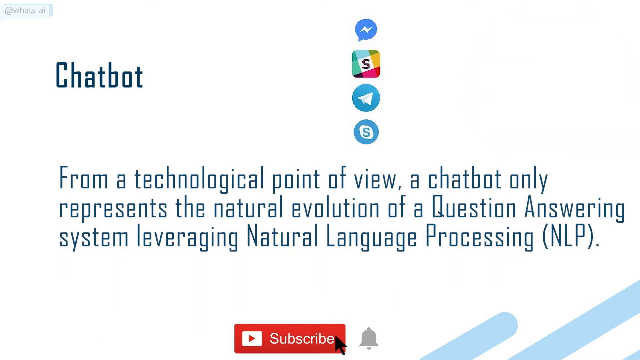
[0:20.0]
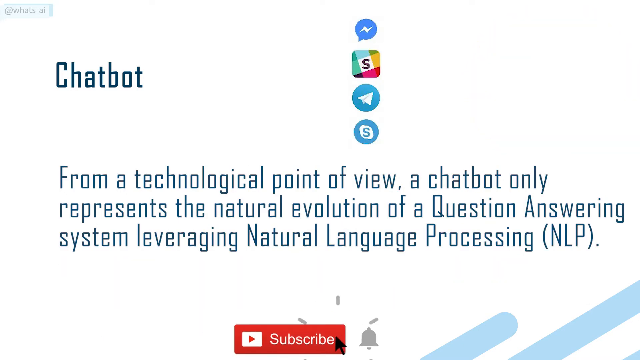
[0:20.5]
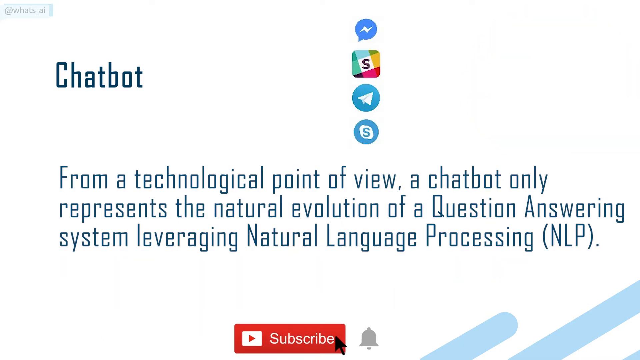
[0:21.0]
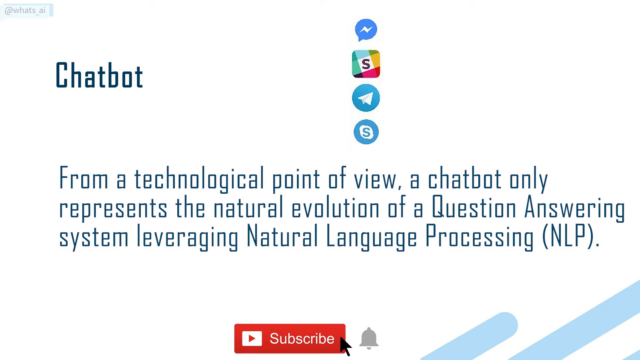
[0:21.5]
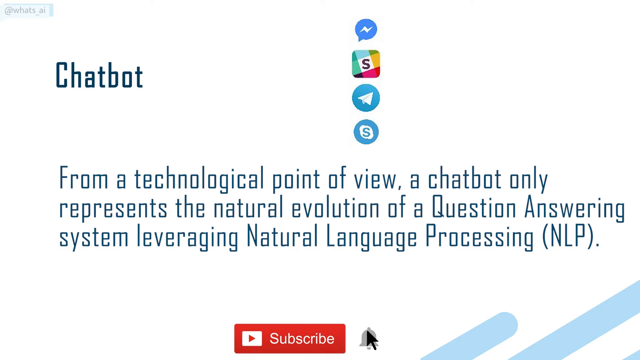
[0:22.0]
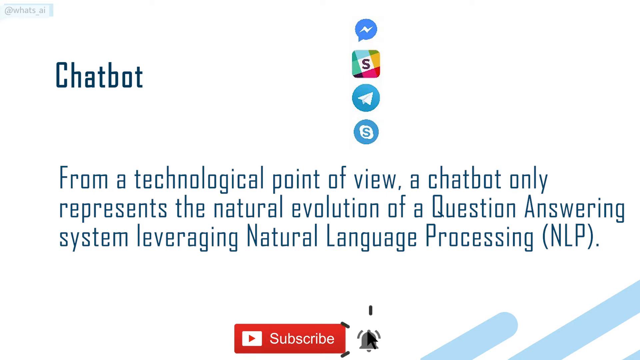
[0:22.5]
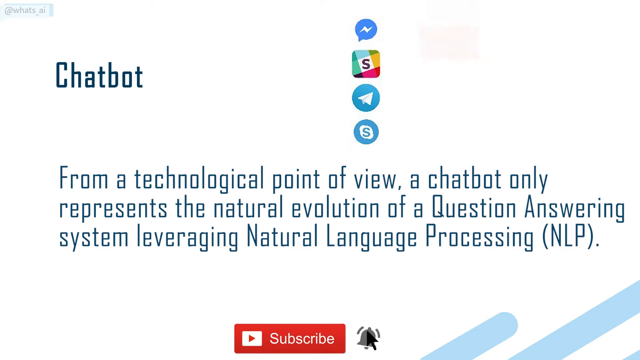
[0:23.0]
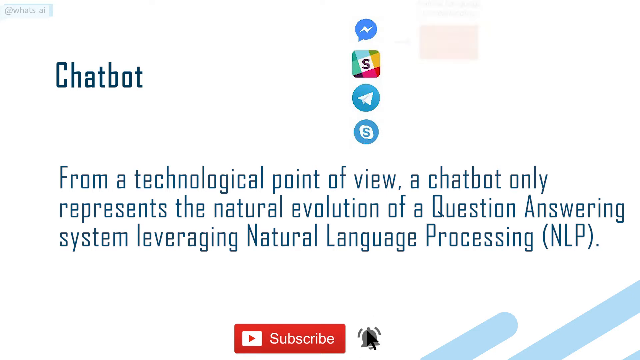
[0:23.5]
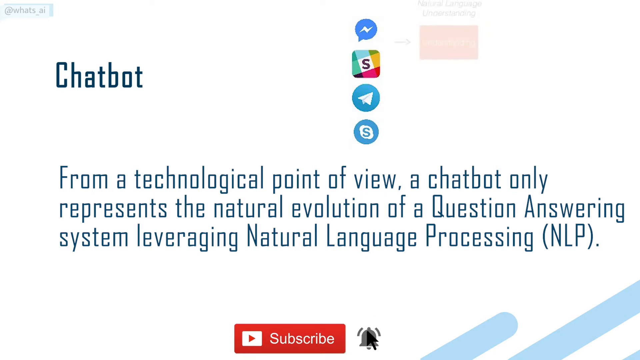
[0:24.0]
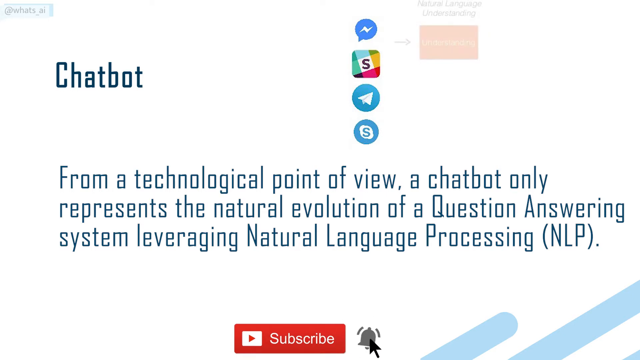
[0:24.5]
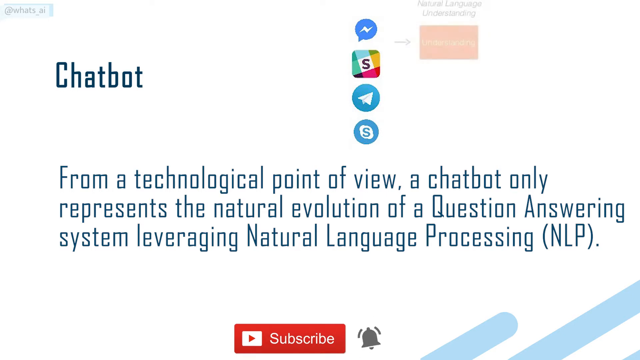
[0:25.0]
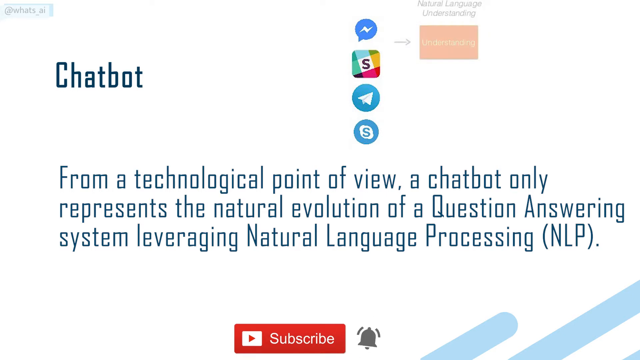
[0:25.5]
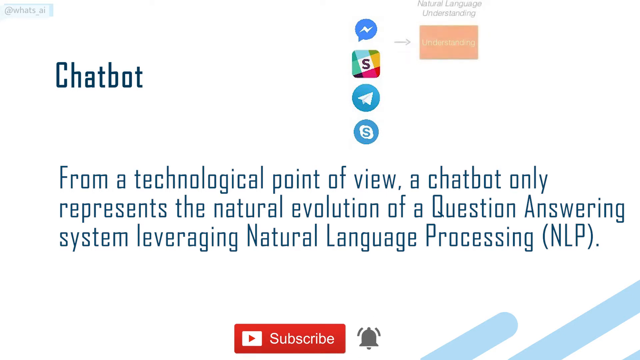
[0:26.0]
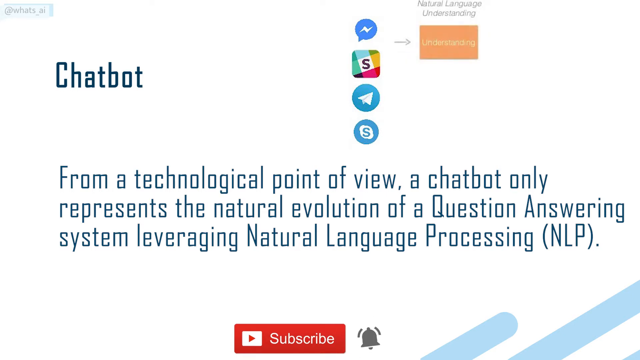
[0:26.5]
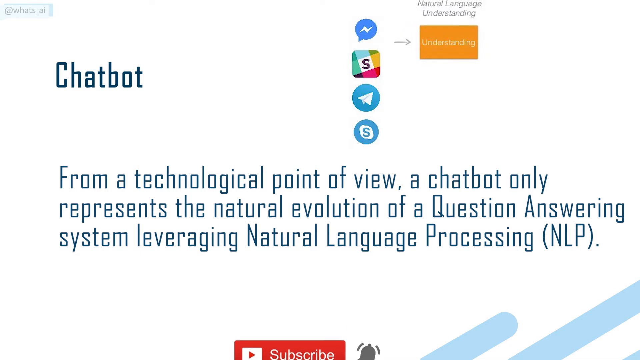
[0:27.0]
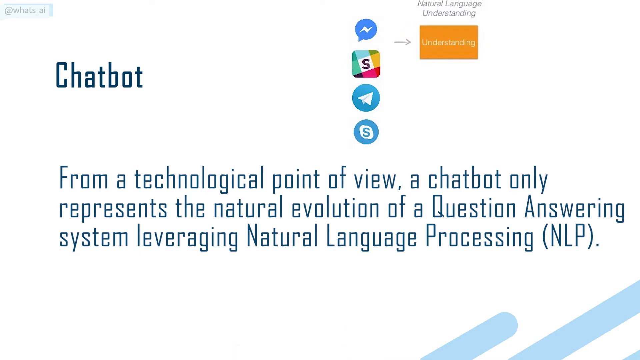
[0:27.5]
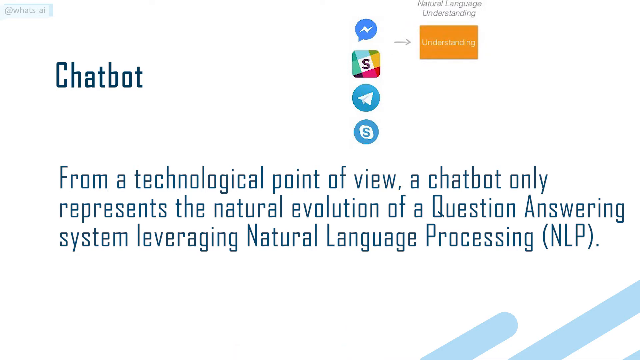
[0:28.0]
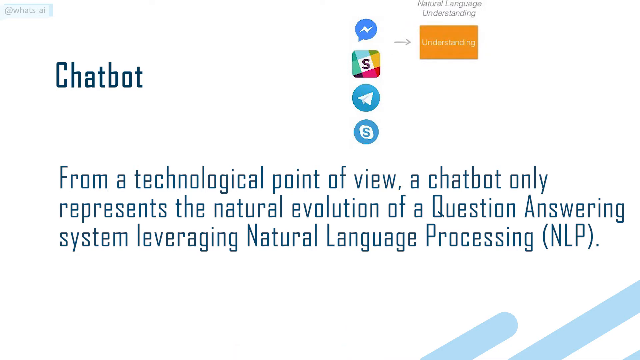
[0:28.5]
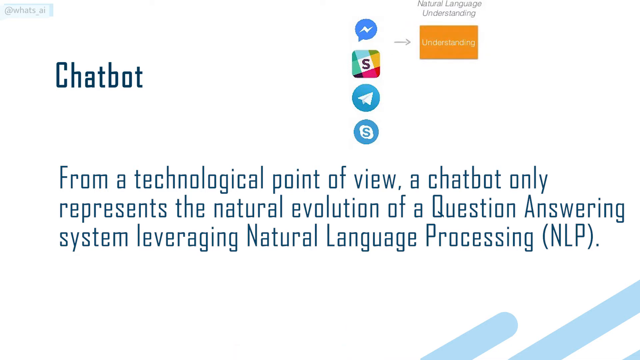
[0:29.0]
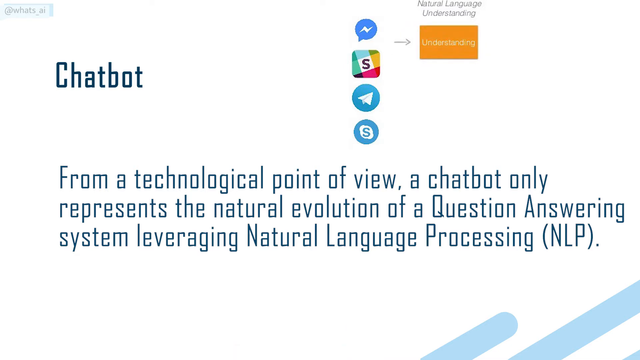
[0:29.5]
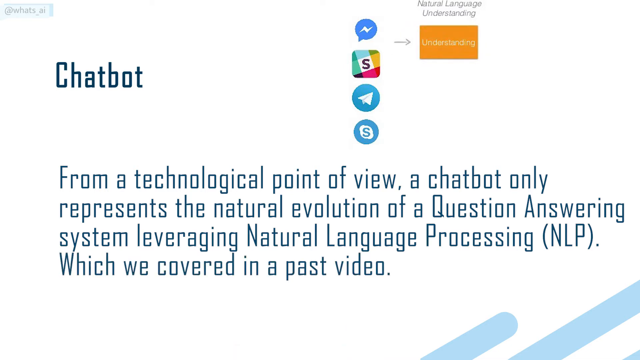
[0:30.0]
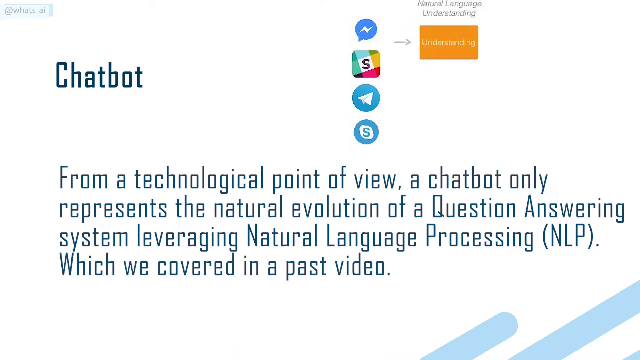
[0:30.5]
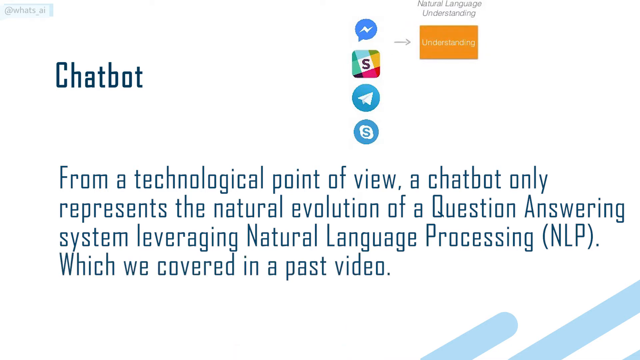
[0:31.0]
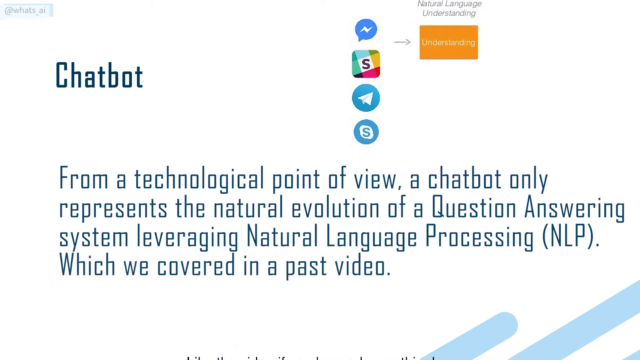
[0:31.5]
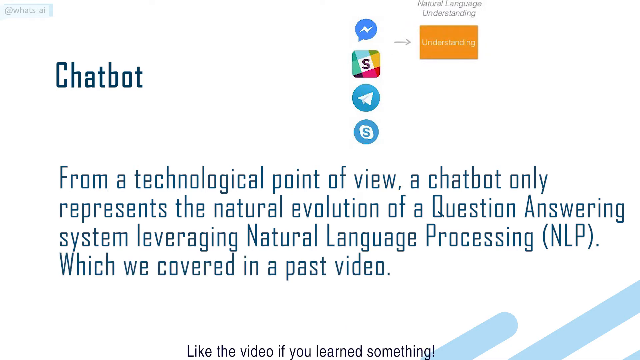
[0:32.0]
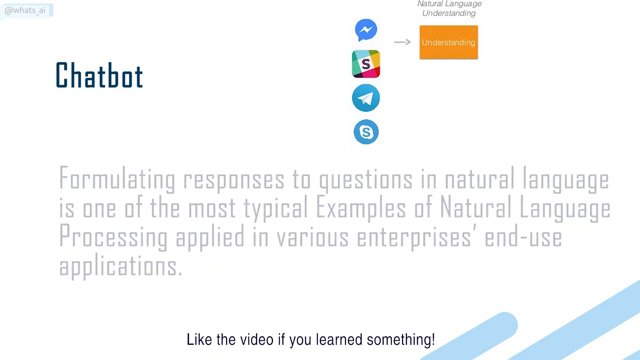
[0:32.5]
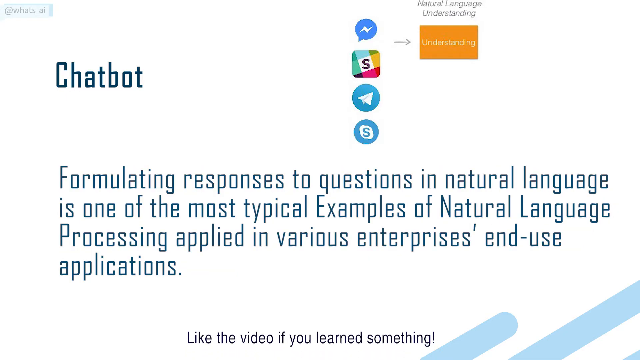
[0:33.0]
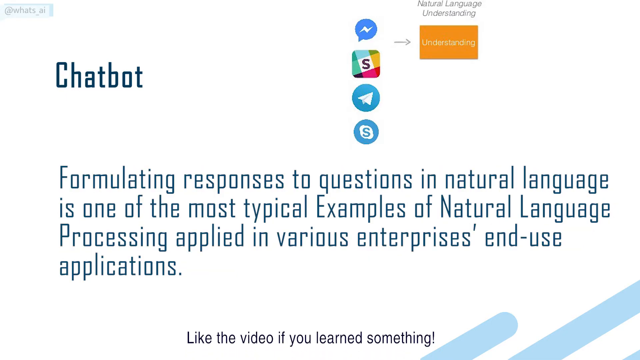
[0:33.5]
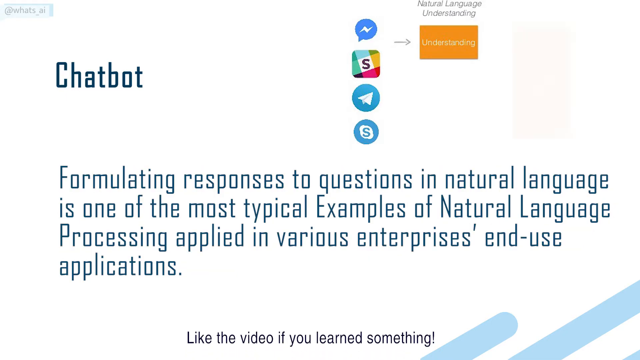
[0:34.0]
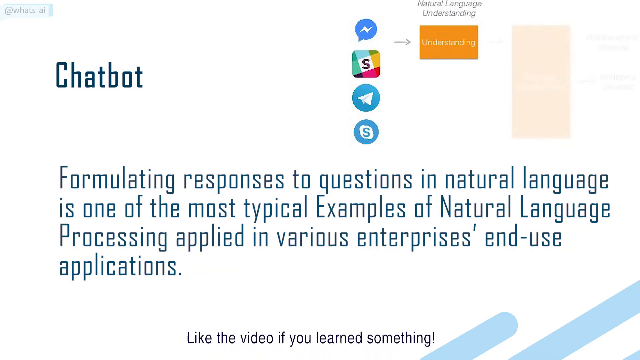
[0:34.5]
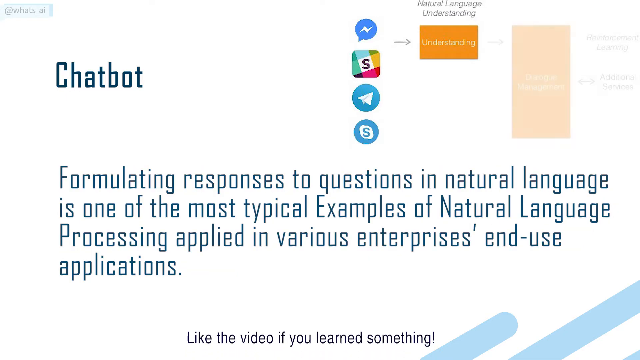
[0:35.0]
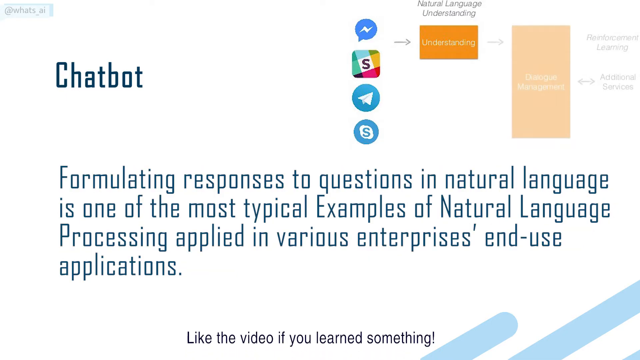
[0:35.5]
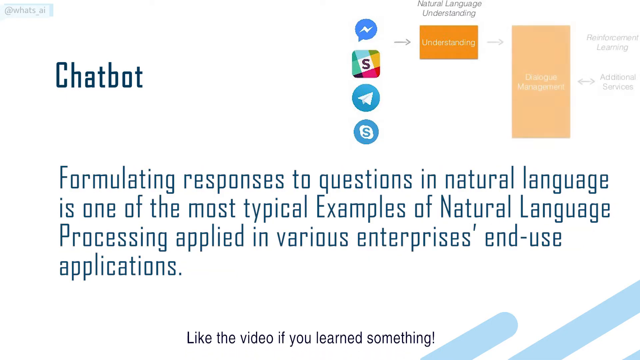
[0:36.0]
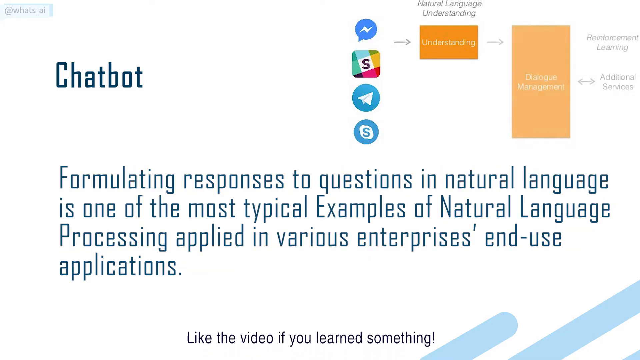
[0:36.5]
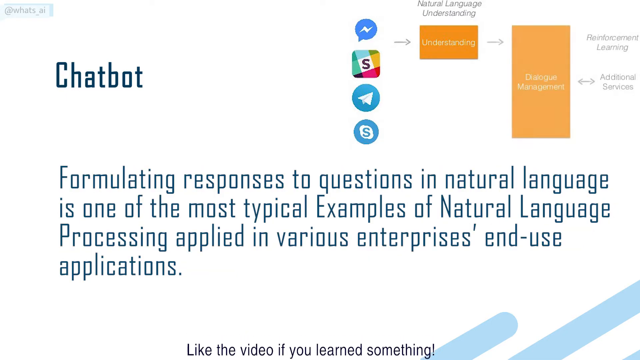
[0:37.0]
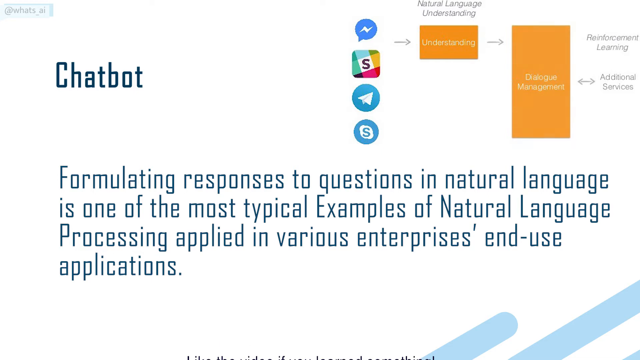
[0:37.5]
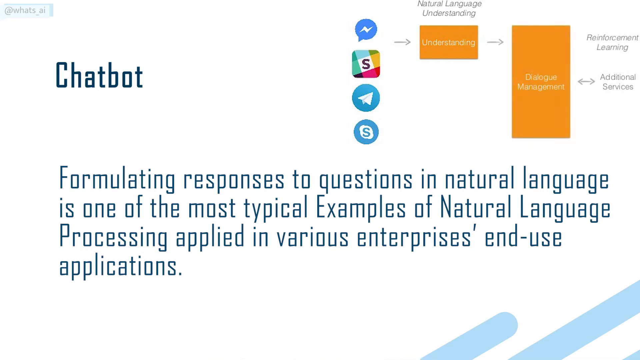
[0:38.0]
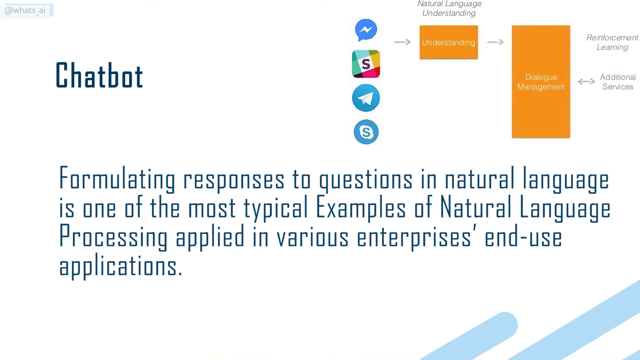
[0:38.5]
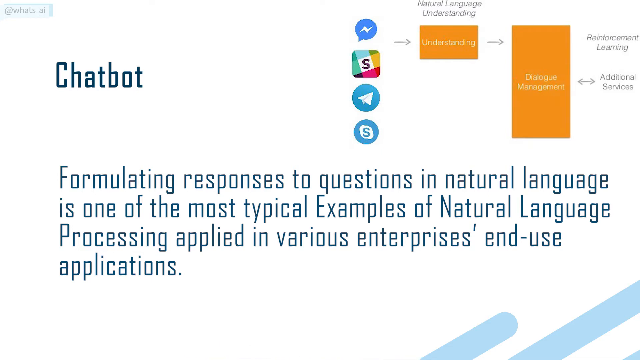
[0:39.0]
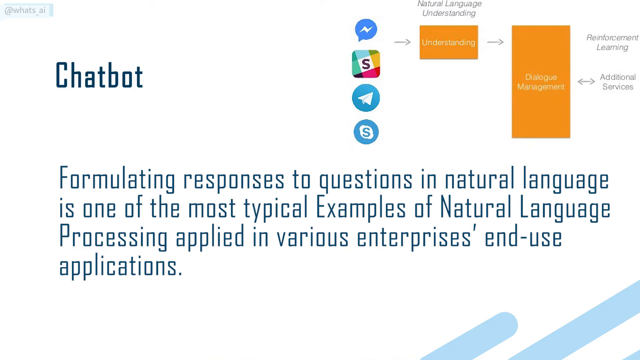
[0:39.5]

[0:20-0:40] Words and definitions about what chatbots are appear on the screen, with icons at the top. The text says "natural language understanding" and "which we covered in a past video." Then it reads "formulating responses to questions in natural language is one of the most typical examples of natural language processing applied in various enterprises and end use applications." Up in the right-hand corner, rectangles and diagrams appear showing different search engines, labeled "natural language understanding," "reinforcement learning" and "additional services," with different arrows showing the information going back and forth. New words then appear on the screen, beginning "from a technological point of view, a chatbot only represents the natural evolution of a question answering system, leveraging."